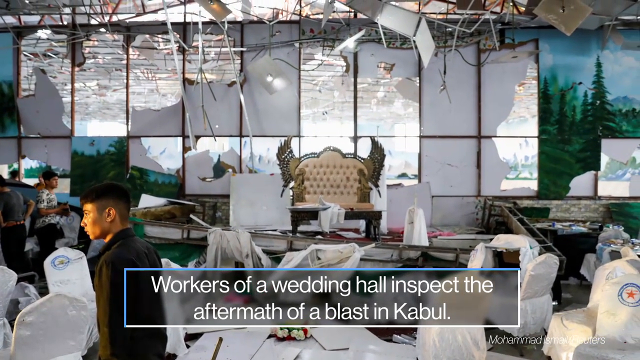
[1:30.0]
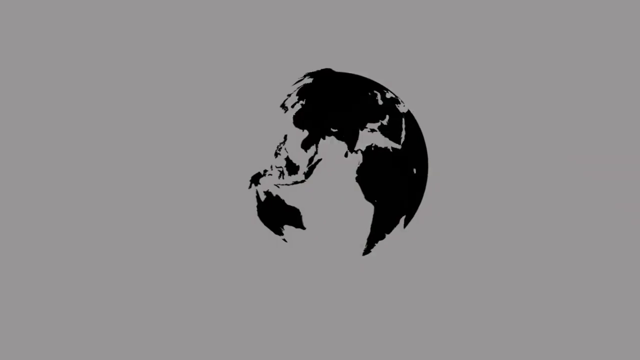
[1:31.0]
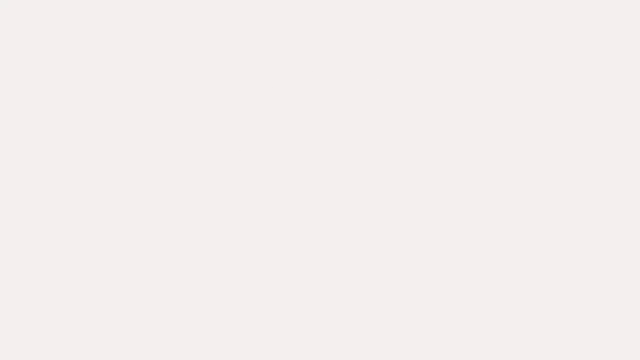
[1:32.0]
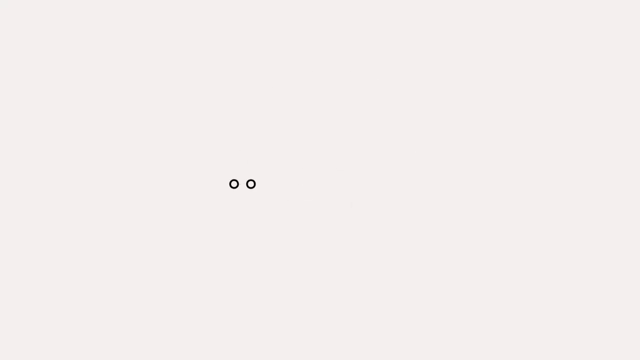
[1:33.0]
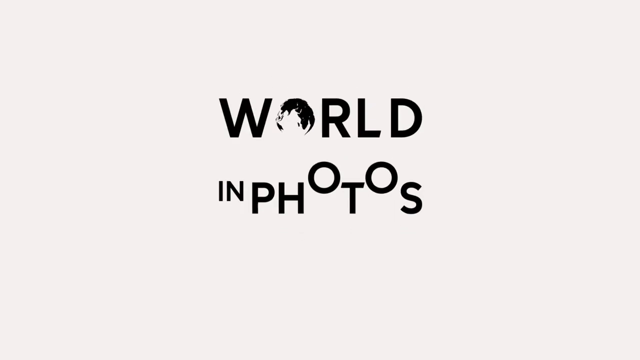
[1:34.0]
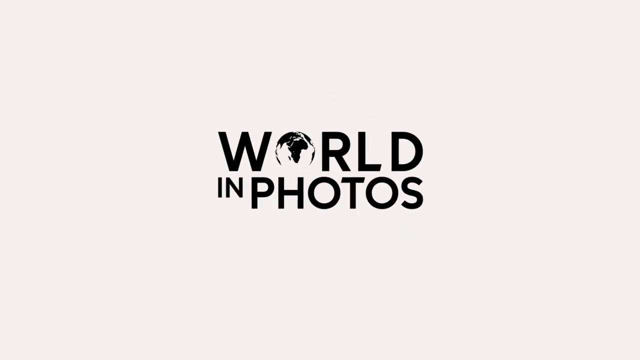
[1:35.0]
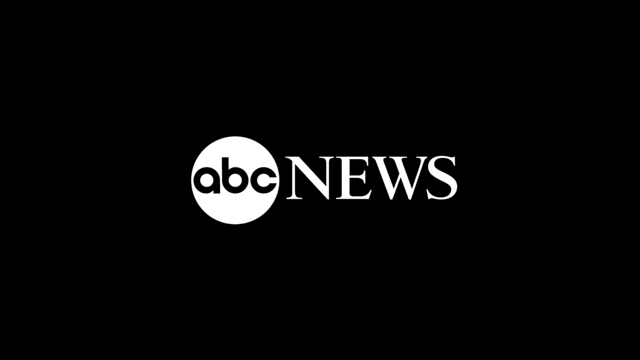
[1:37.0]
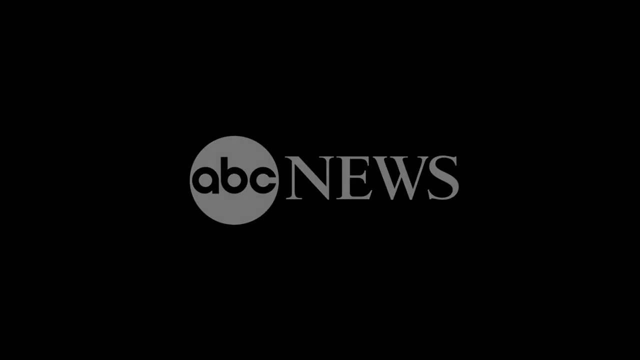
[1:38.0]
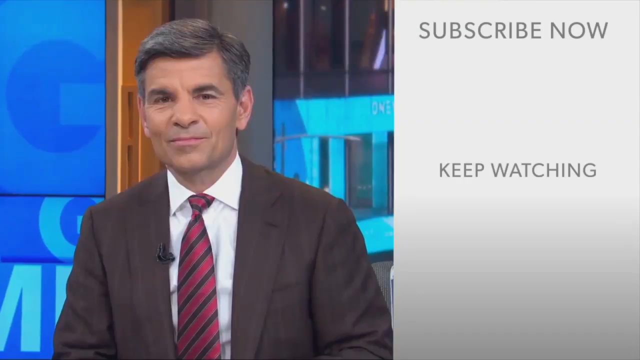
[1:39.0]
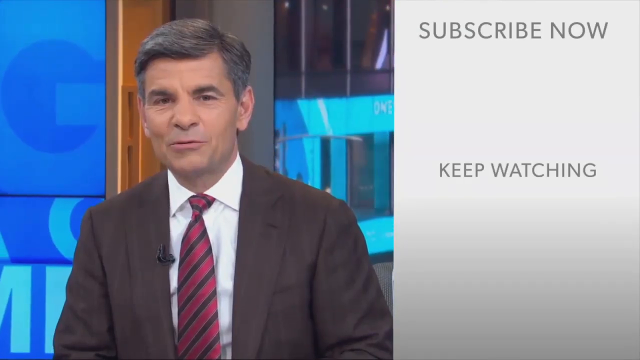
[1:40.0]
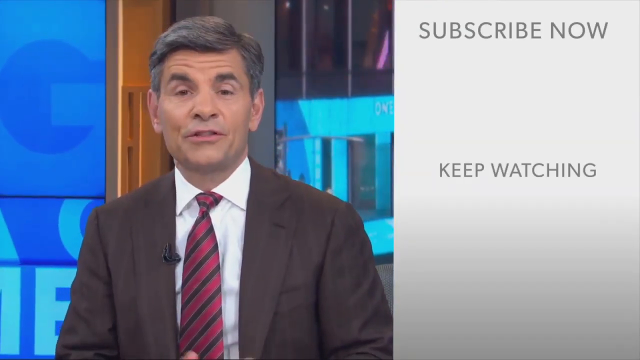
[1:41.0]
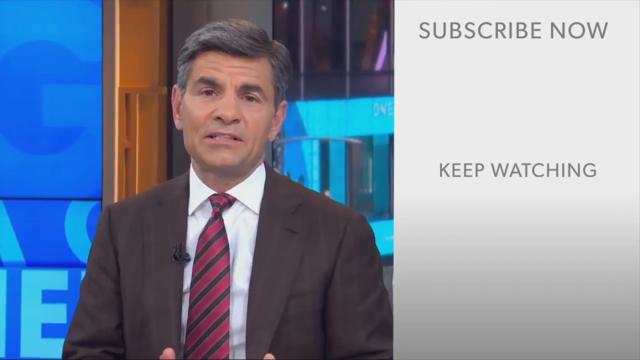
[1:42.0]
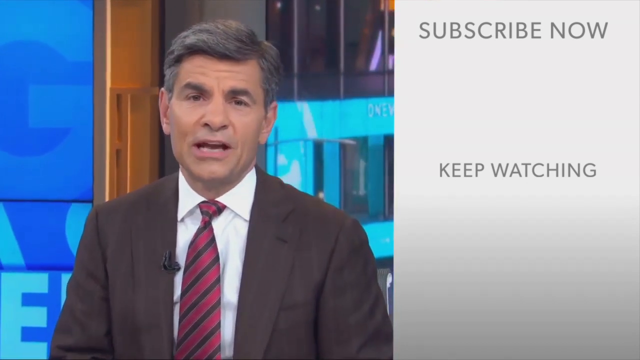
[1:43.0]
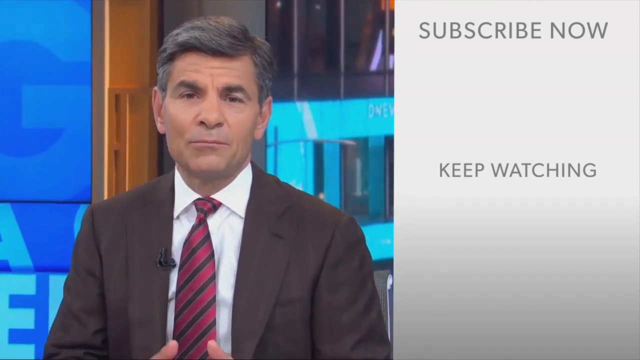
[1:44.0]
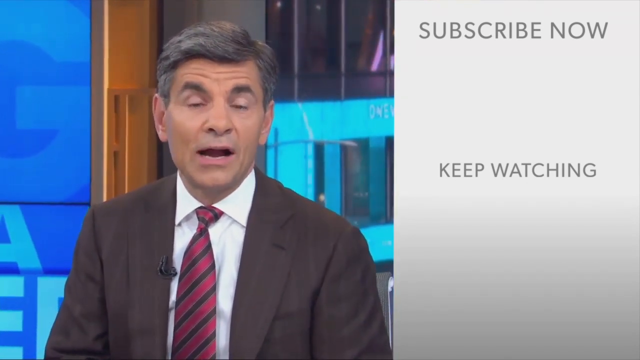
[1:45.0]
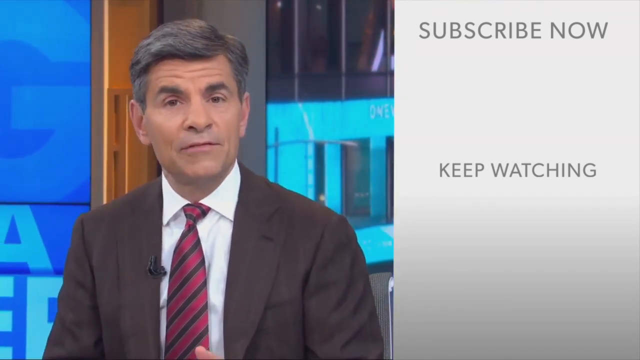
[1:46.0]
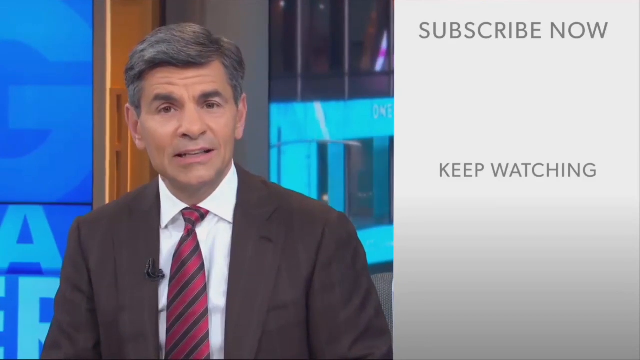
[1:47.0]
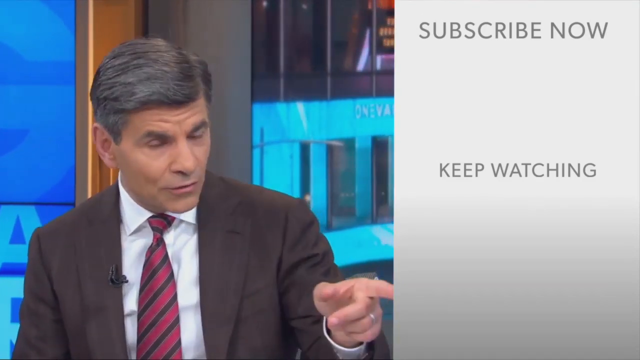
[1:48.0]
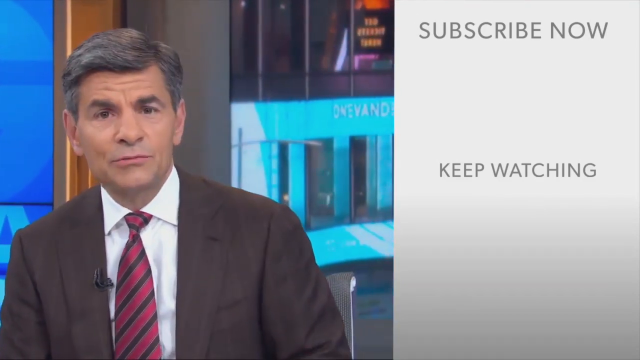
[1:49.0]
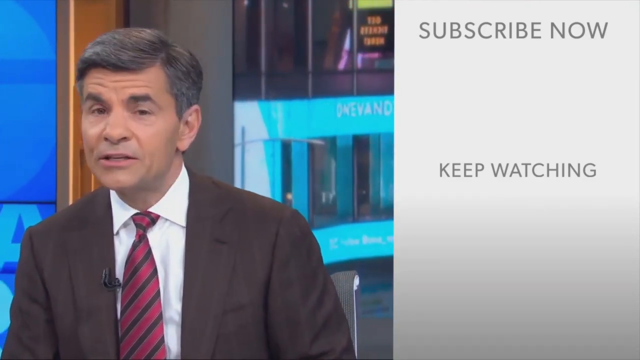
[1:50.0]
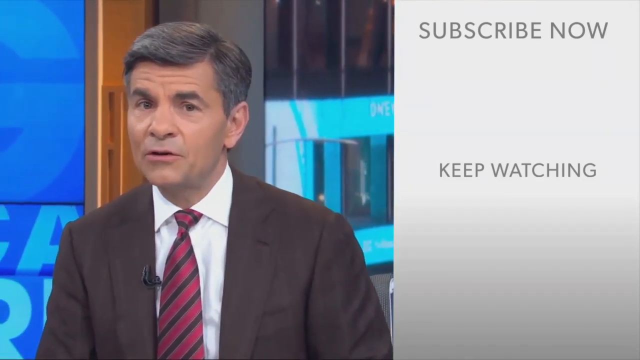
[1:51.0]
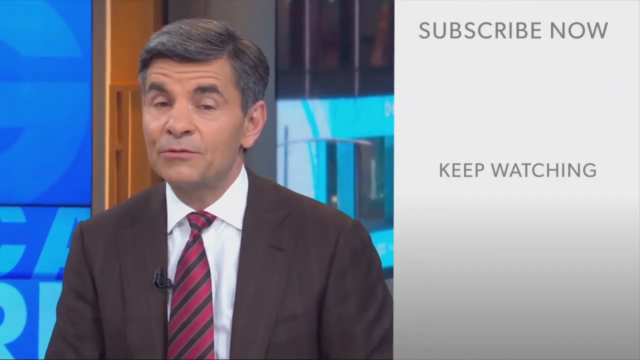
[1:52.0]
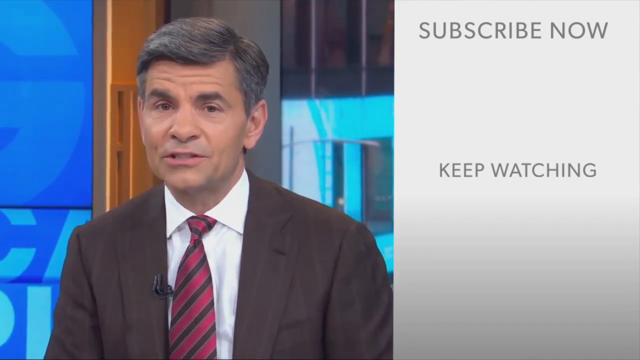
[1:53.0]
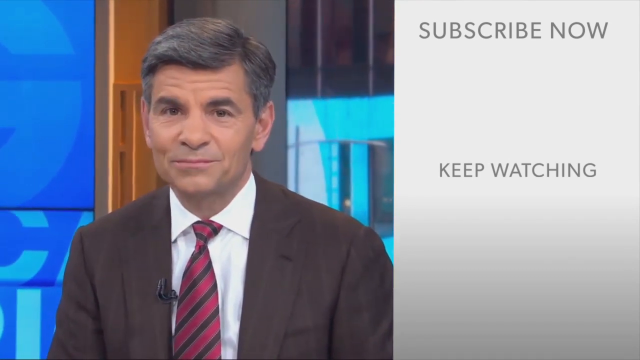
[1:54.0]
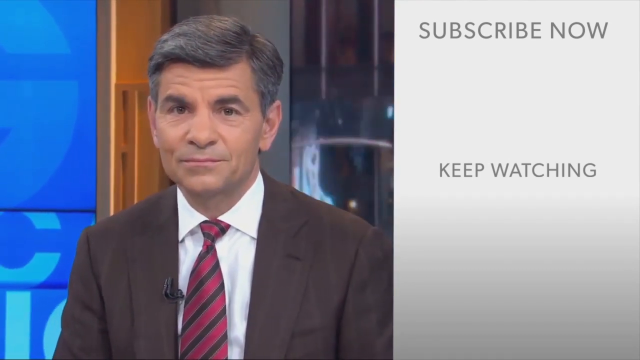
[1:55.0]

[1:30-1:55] The image of the wedding hall zooms out, revealing more damage to the building. An animation of a blue and white lined screen appears, followed by the animation of the black and white globe spinning. Again, the camera focus symbol is shown, and two dots turn into the O's inside the "World in Photos" logo. Another animation of blue lines crosses the screen to reveal a black screen with the ABC News logo on it. A newscaster appears on the left side of the screen, wearing a small microphone pinned to his suit. On the right side is text that says "subscribe now and keep watching." The man is somewhat older, with gray and white hair, and stares directly into the camera, raising his eyebrows and widening his eyes for emphasis.